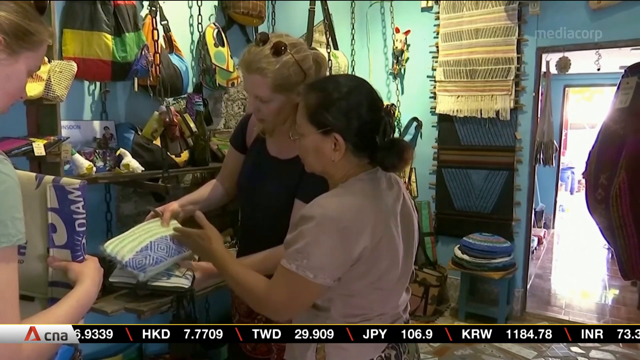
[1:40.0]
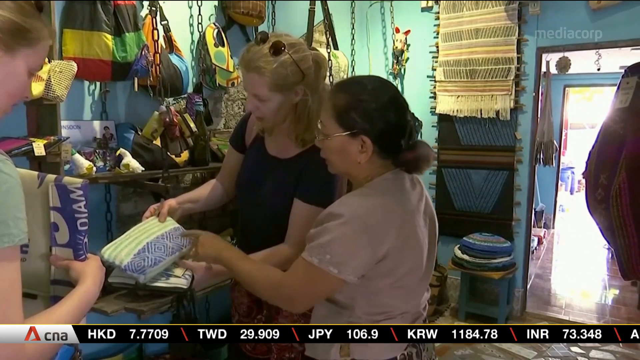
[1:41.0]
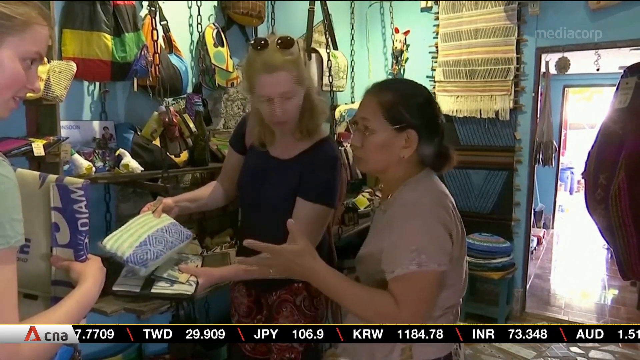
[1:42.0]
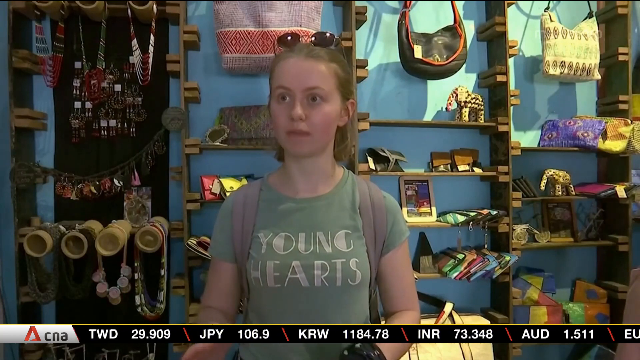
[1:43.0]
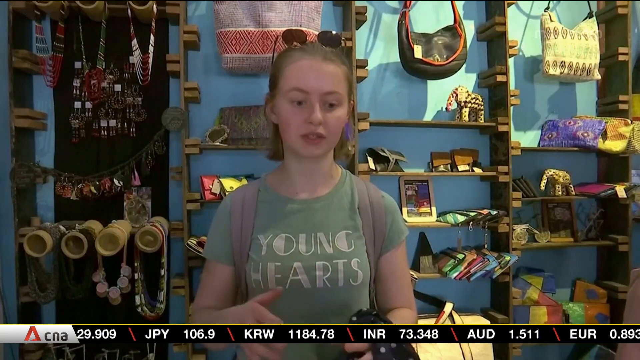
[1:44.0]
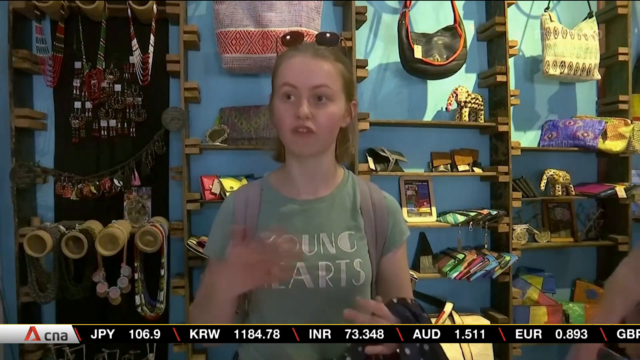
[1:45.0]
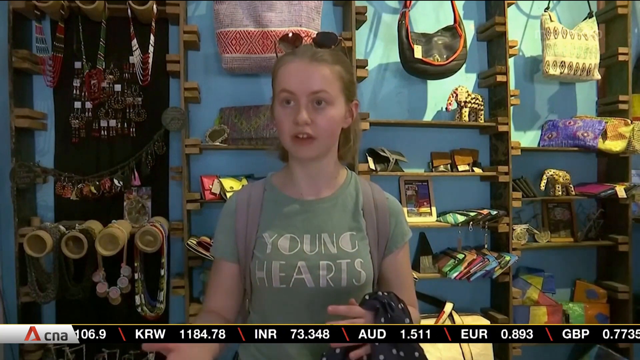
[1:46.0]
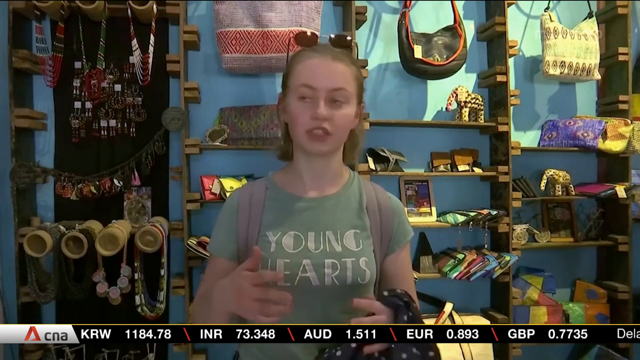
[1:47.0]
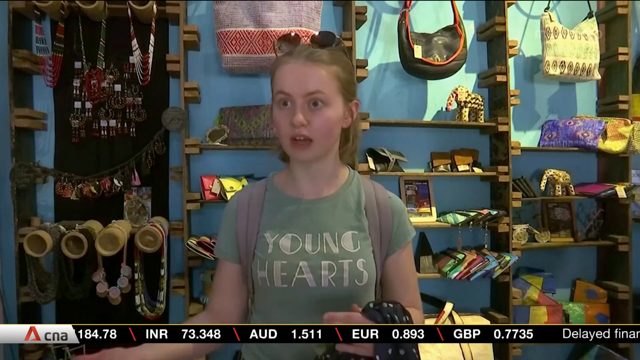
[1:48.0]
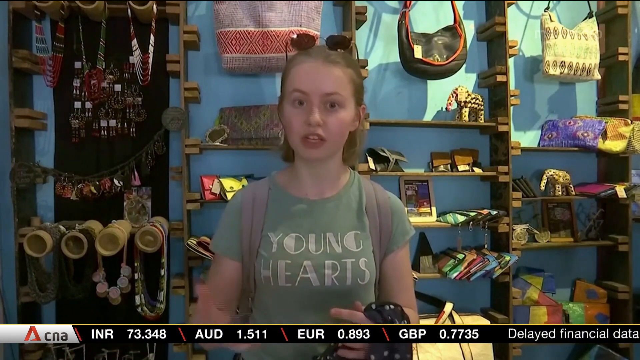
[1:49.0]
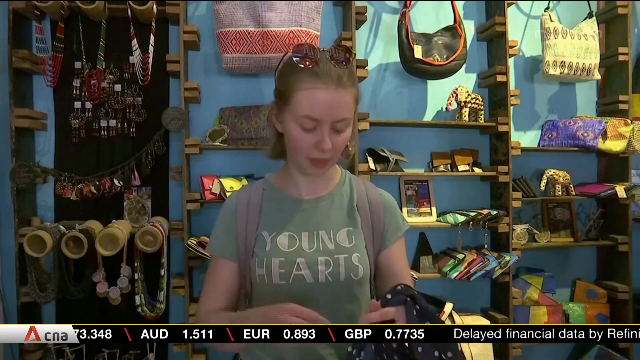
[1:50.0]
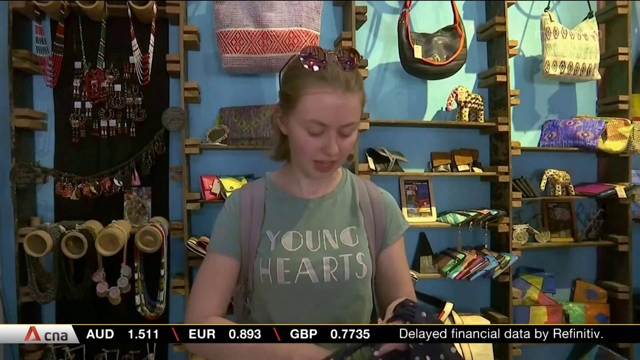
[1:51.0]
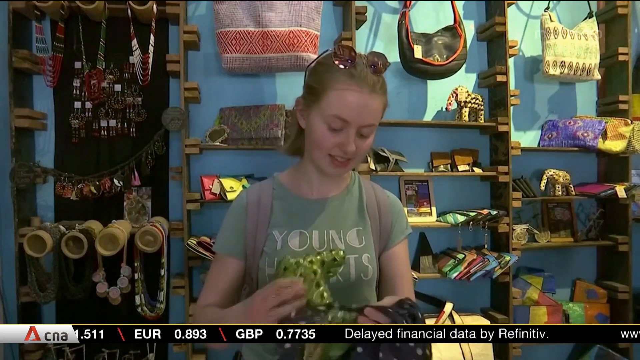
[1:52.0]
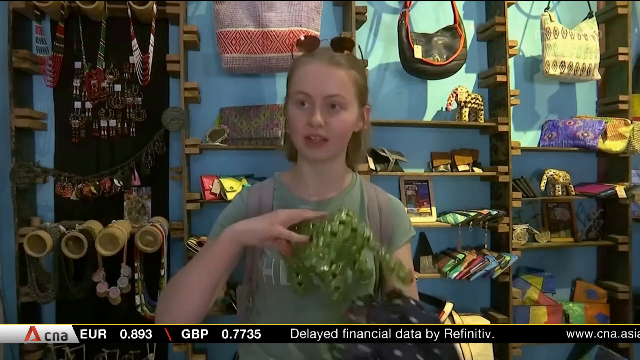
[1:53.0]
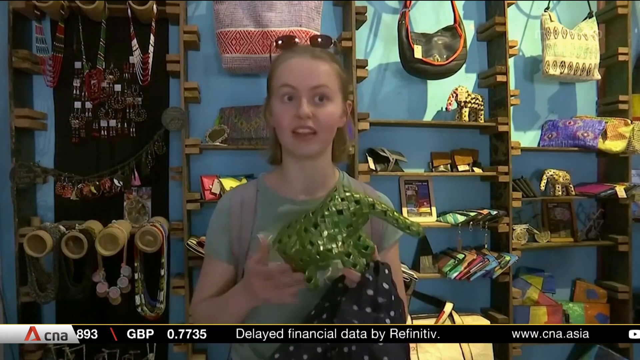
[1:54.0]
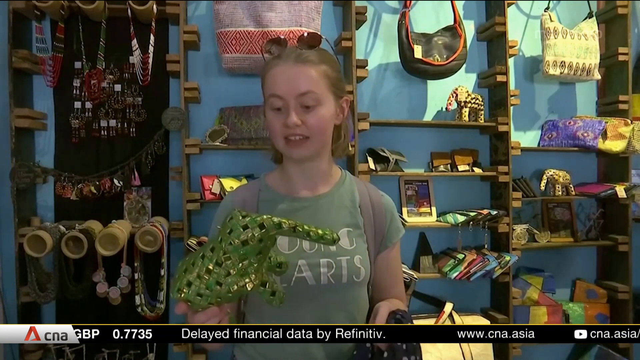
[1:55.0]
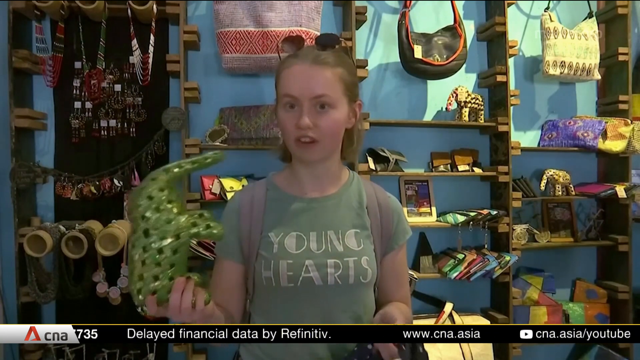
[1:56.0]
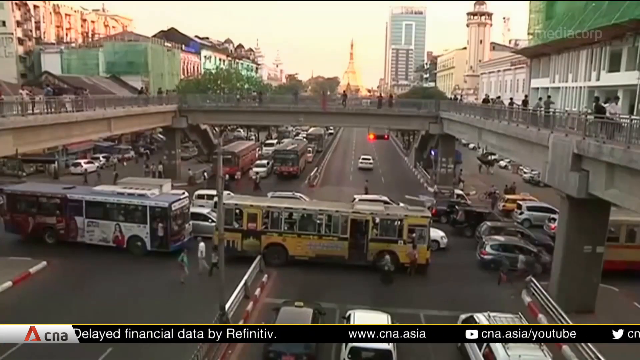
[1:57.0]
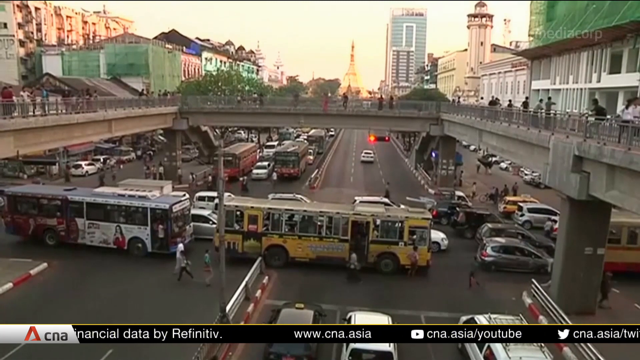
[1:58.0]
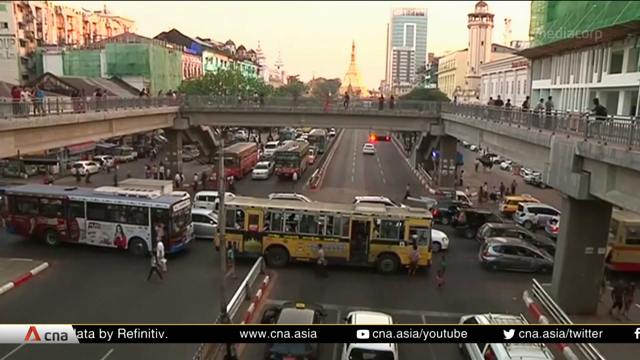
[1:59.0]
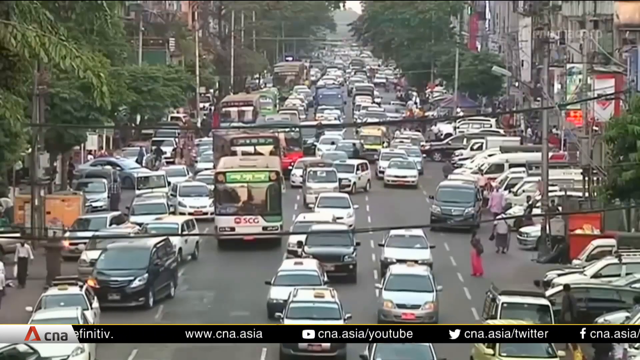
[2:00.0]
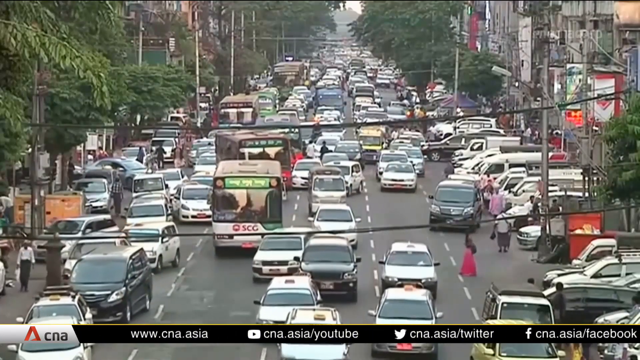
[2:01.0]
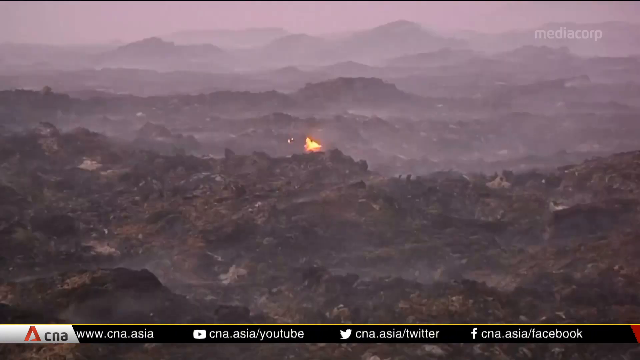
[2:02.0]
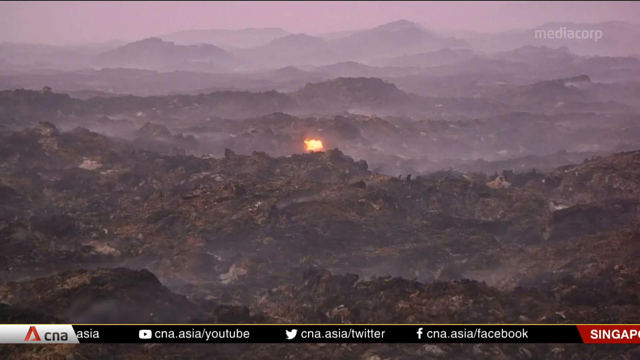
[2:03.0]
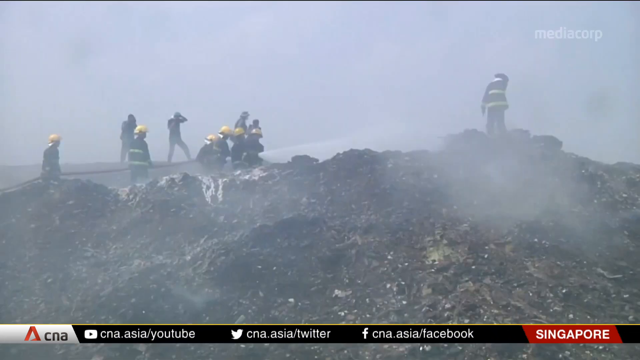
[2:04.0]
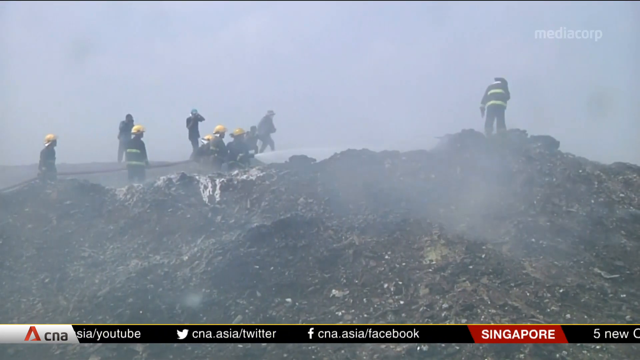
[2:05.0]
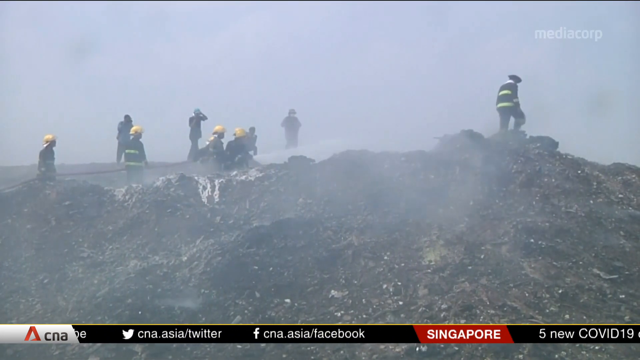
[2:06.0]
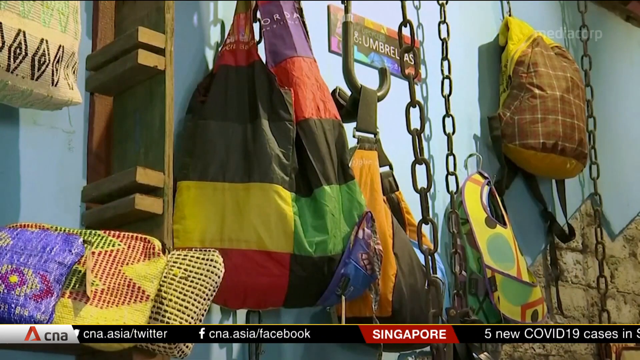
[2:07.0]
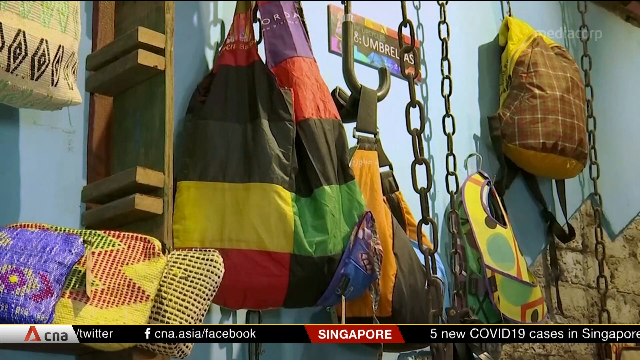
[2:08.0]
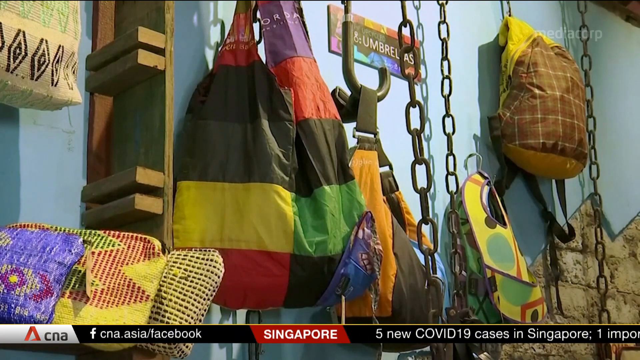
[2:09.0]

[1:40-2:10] In the shop are the two ladies who collect waste to recycle it, along with a customer or journalist who asks them questions. They pick up a small powder blue pillowcase or small cushion, apparently explaining how they made it. A young girl, maybe a teenager of around 16 to 18, is there; she is white, has glasses on top of her head and wears a powder blue top with the words "young hearts" on it, and she is possibly also being interviewed. The background is a store with many items hanging, including traditional necklaces in colors such as white and red, and bags in different colors such as black and gray. An elephant made from plastic is shown. After this, a township appears, with a town and cars.